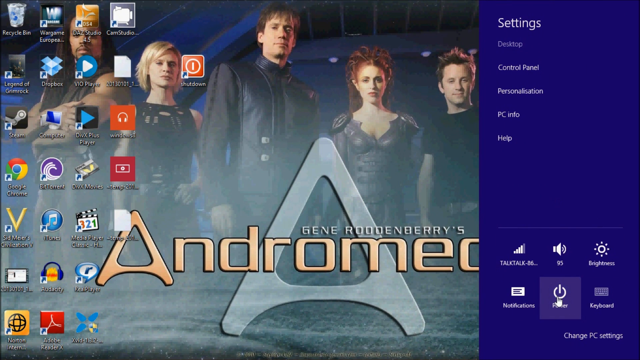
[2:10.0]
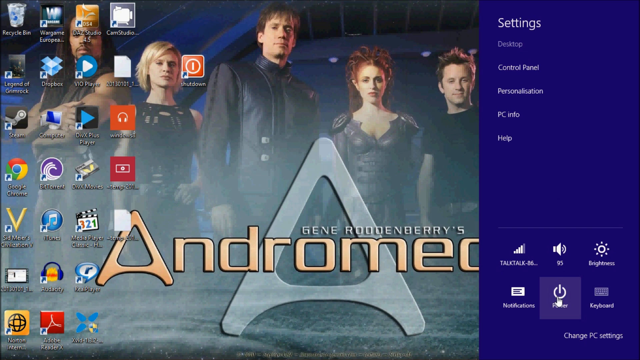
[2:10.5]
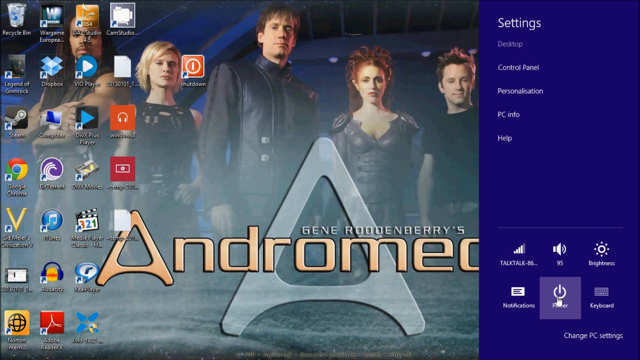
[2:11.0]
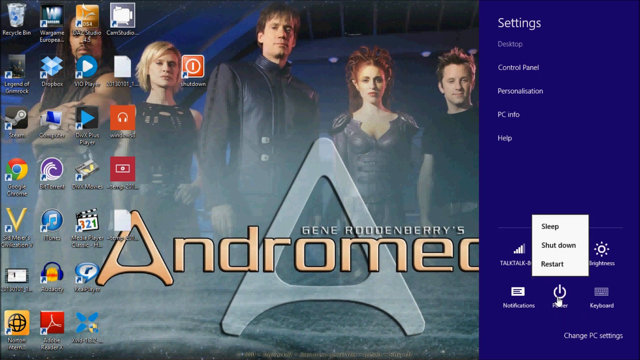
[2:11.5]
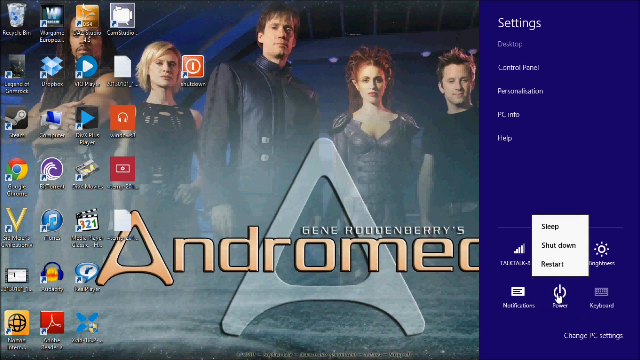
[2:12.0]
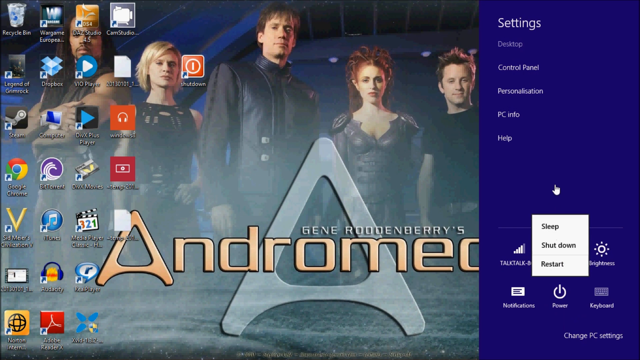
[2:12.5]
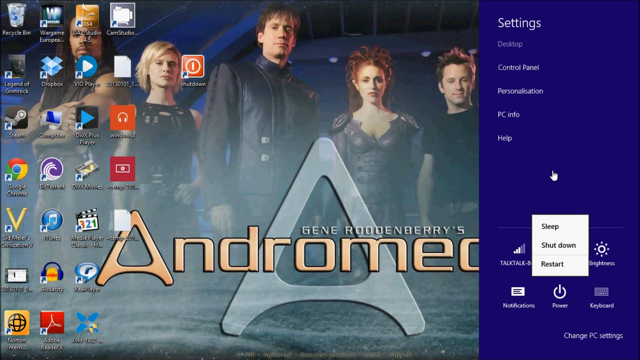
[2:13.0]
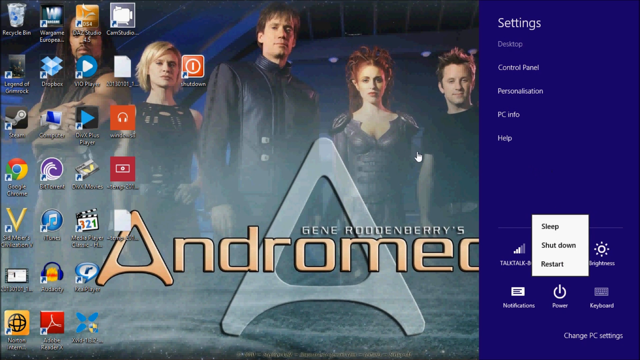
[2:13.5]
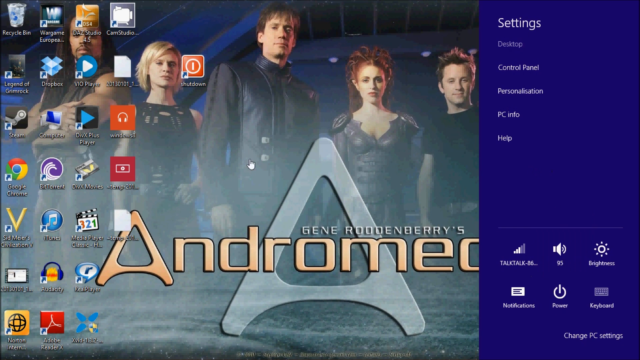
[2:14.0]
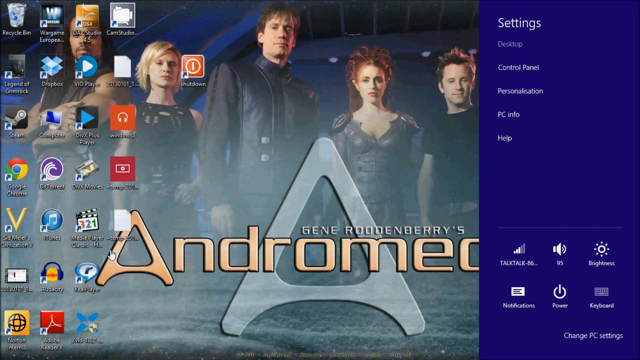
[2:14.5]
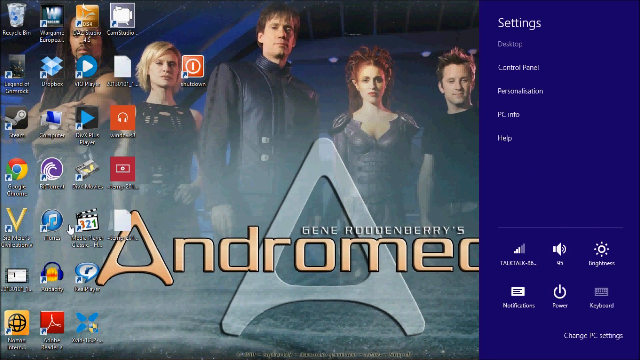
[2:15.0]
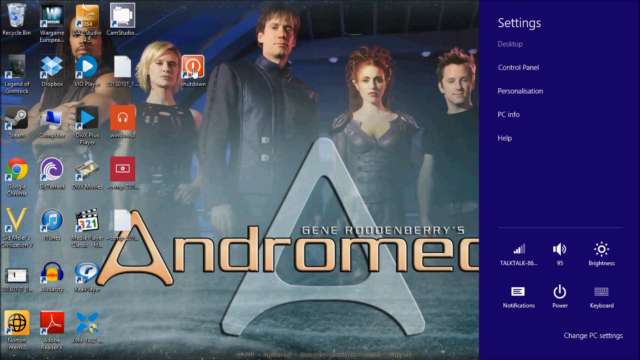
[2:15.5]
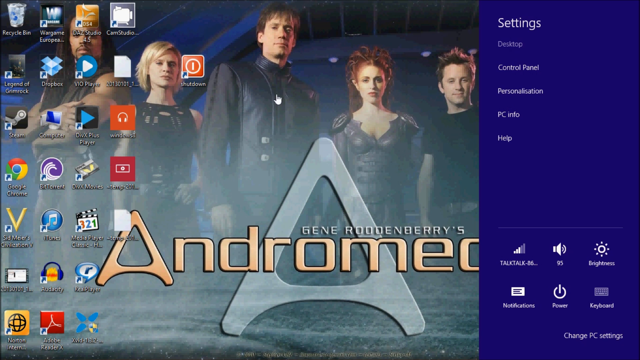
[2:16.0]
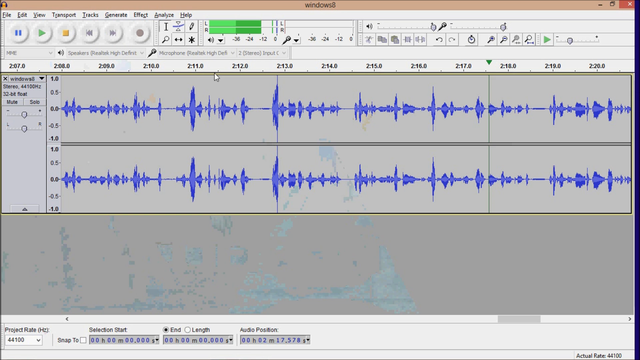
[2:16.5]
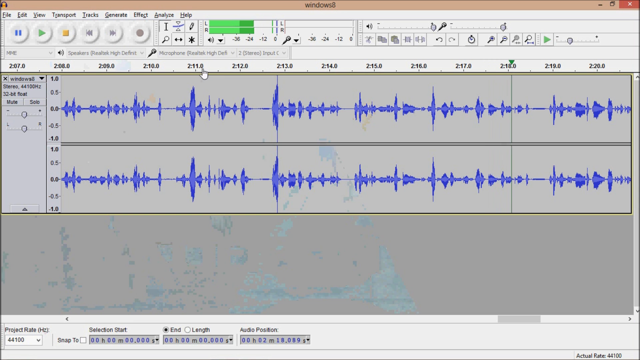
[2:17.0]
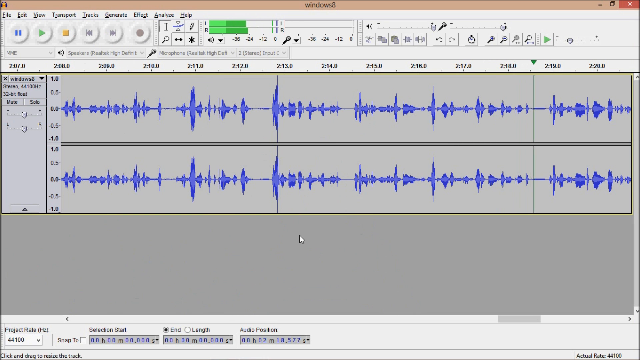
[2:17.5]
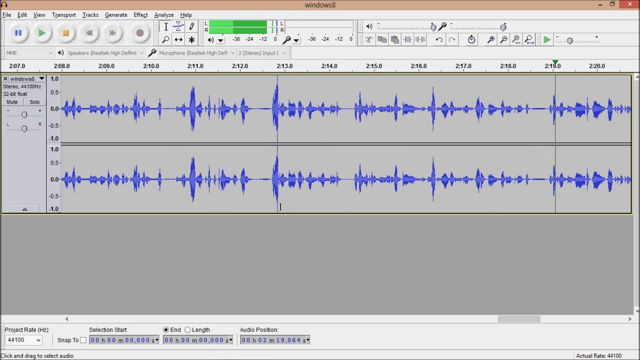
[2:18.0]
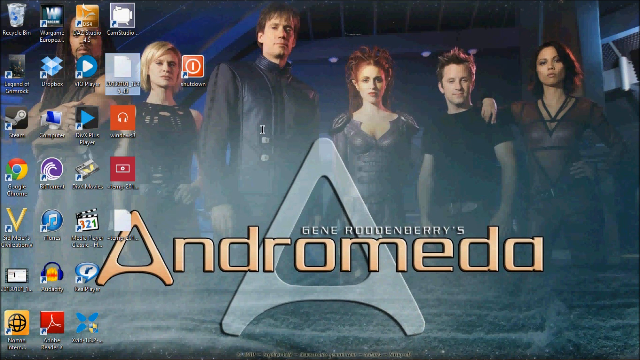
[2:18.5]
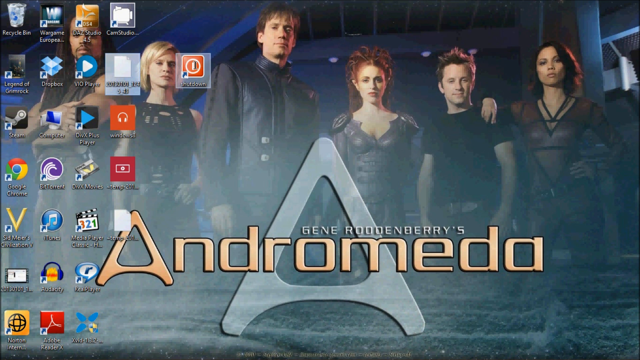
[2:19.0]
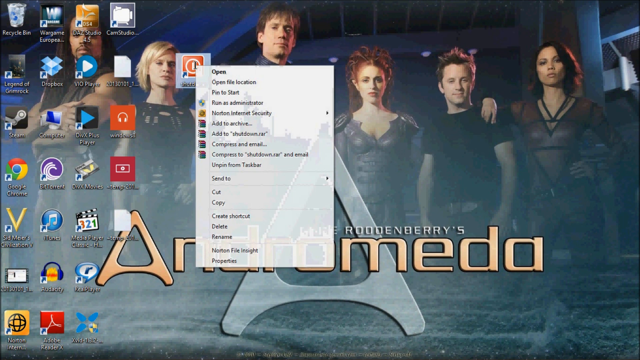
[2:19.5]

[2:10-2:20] The settings area shows desktop, which seems to be highlighted, then control panel, personalization, PC info, and help underneath. At the bottom of the settings section, the user seems interested in the power setting; they highlight it, and sleep, shut down and restart options pop up. They close that and briefly highlight the shut down app button on the home screen, then go back to the Audacity area. They go back to the settings, and the menu again shows sleep, shut down and restart.